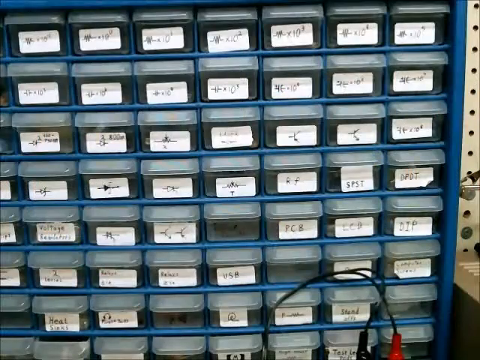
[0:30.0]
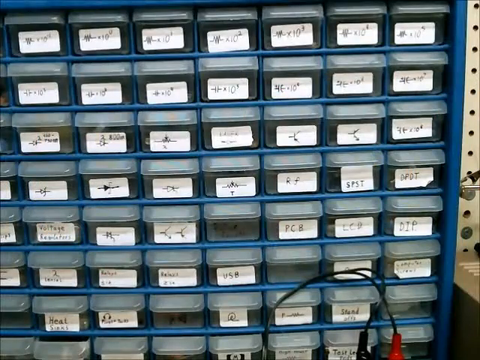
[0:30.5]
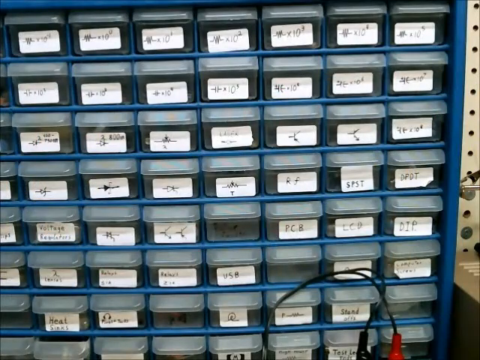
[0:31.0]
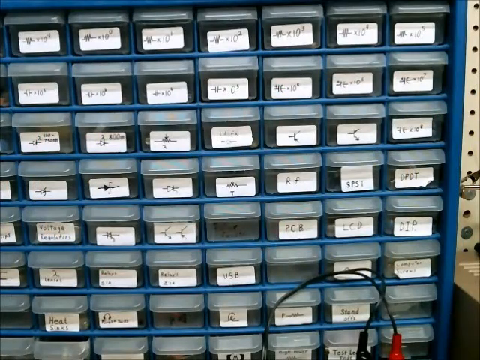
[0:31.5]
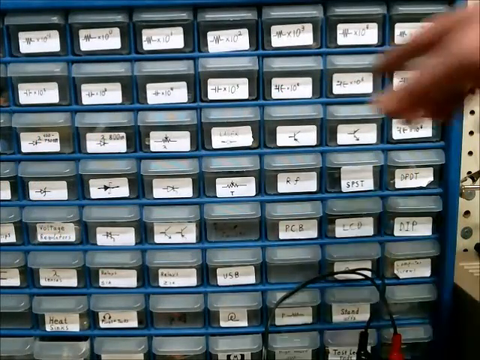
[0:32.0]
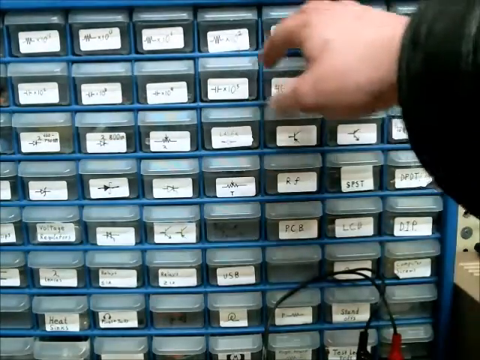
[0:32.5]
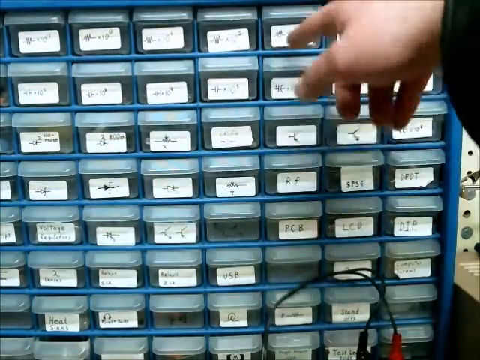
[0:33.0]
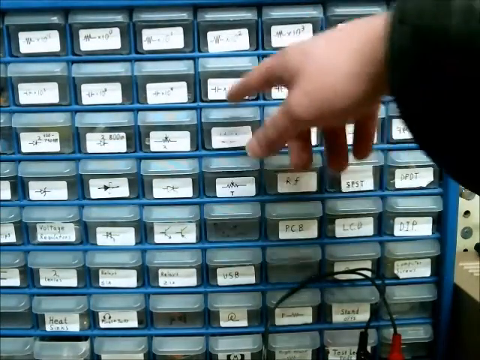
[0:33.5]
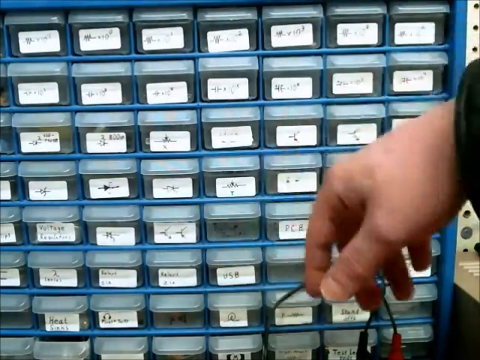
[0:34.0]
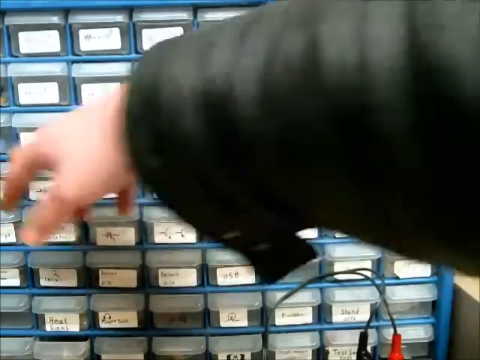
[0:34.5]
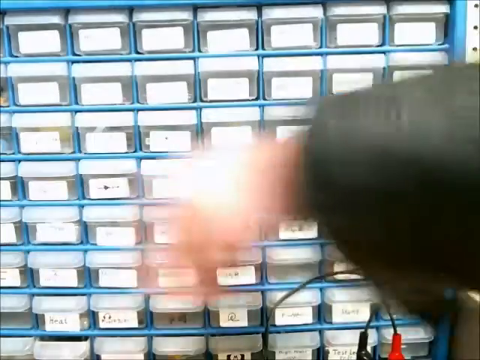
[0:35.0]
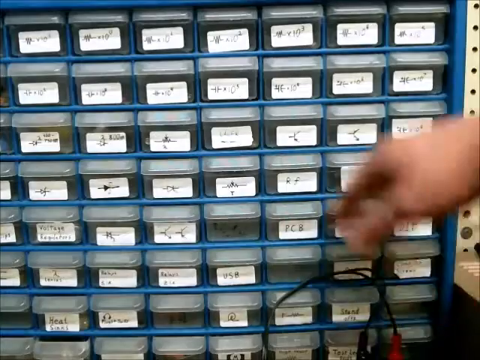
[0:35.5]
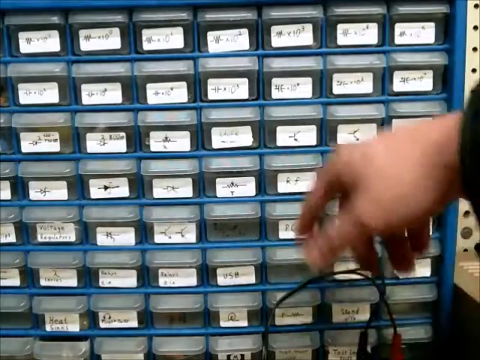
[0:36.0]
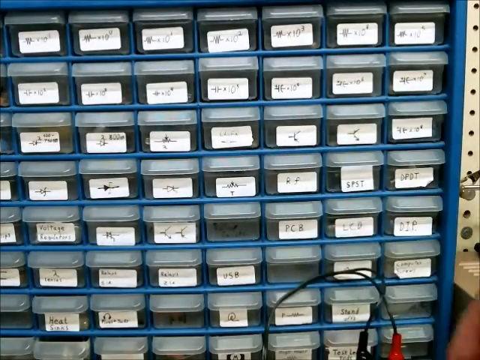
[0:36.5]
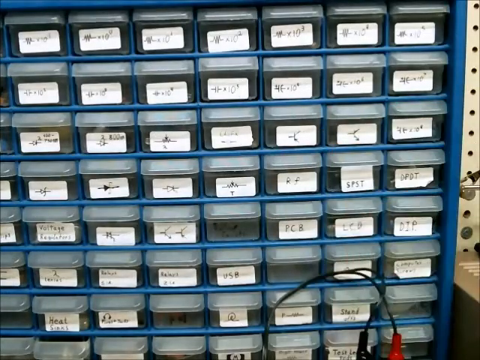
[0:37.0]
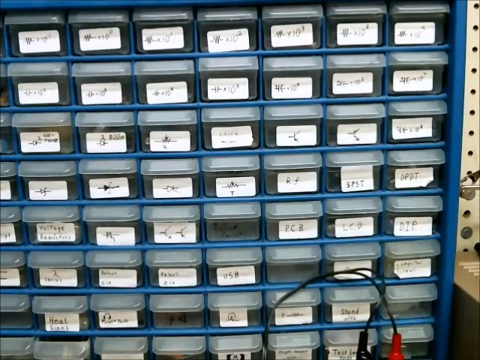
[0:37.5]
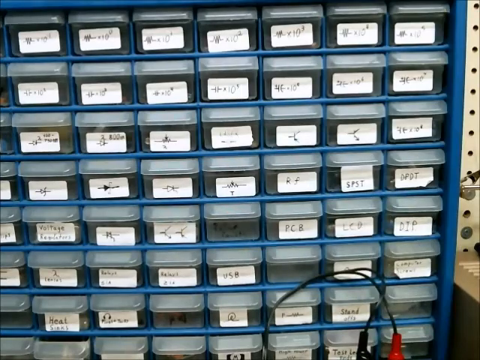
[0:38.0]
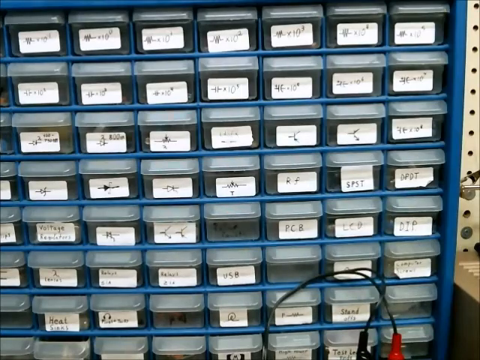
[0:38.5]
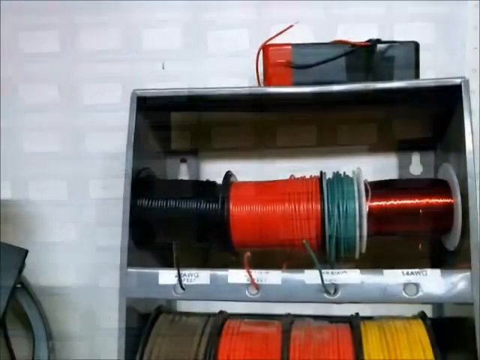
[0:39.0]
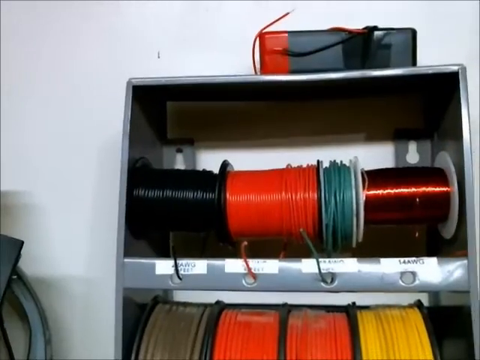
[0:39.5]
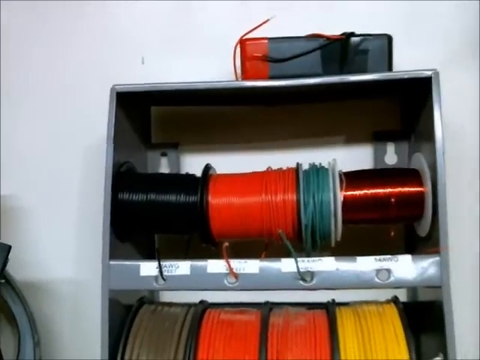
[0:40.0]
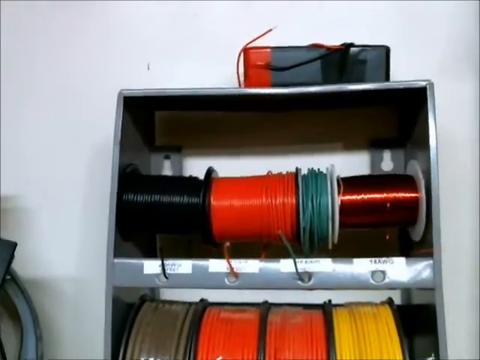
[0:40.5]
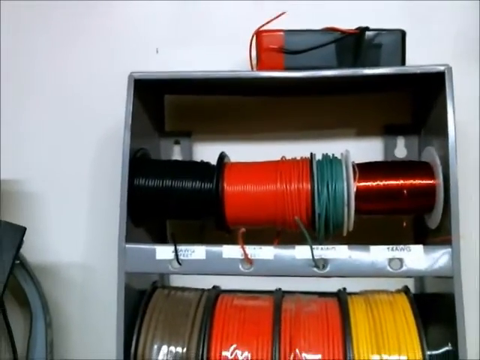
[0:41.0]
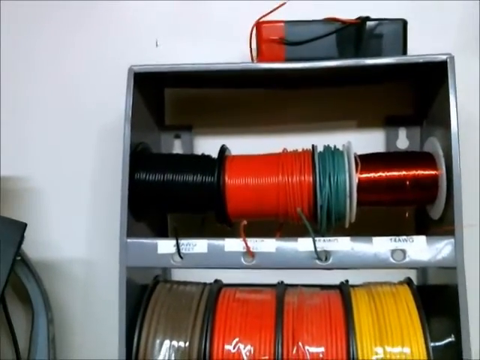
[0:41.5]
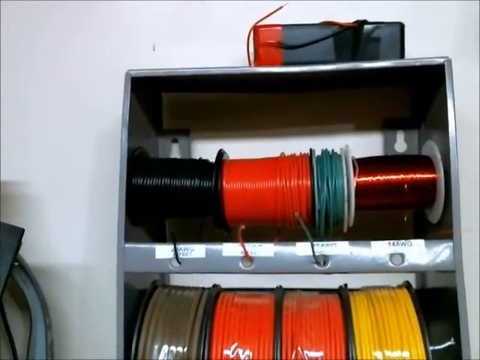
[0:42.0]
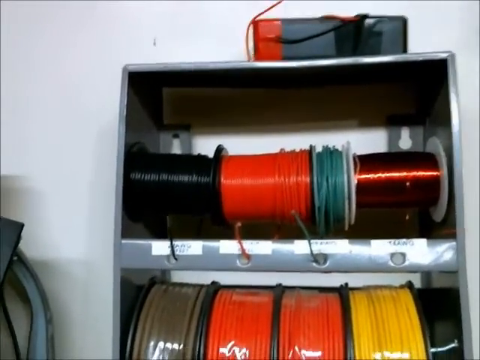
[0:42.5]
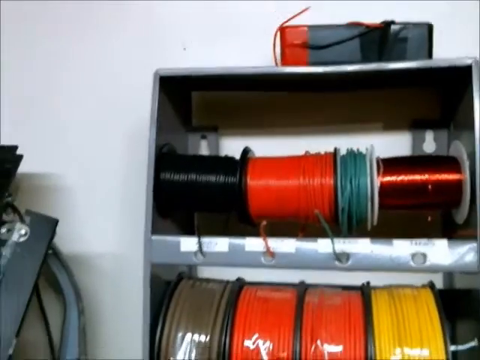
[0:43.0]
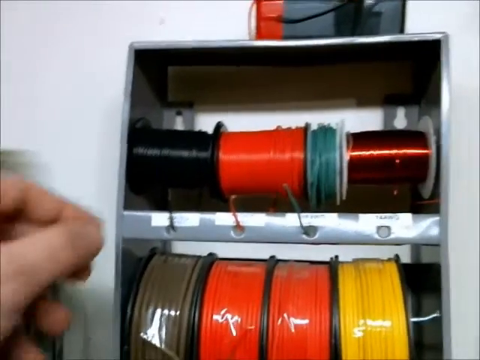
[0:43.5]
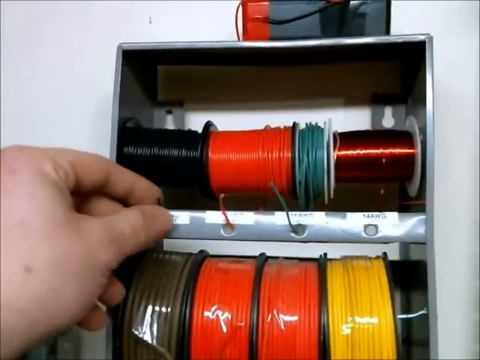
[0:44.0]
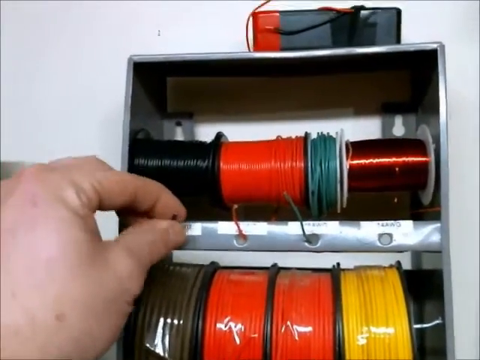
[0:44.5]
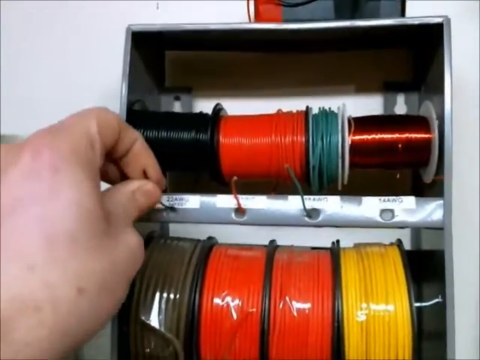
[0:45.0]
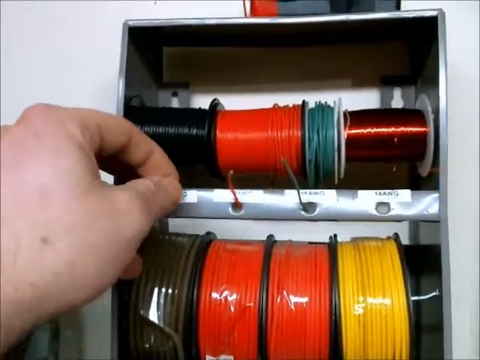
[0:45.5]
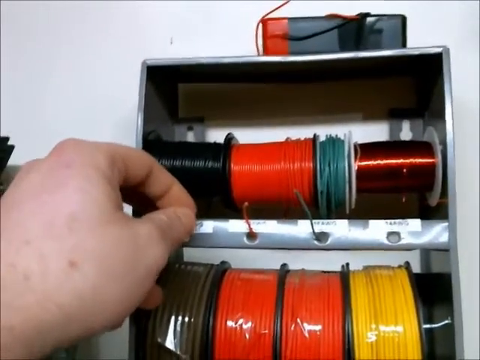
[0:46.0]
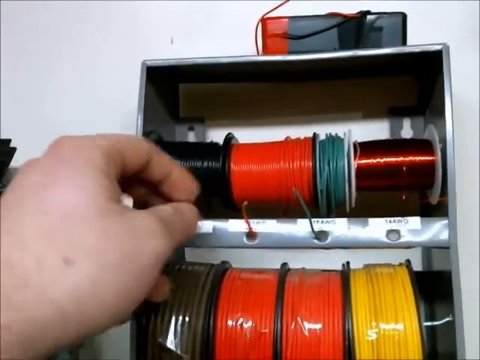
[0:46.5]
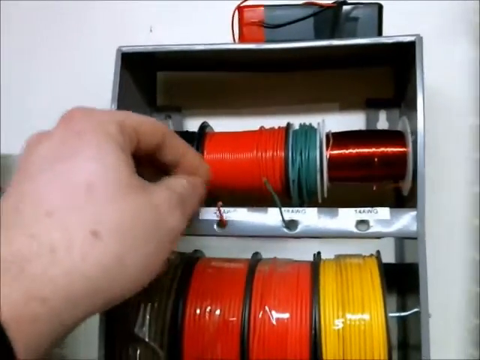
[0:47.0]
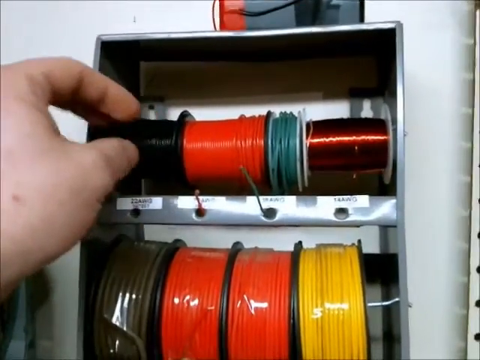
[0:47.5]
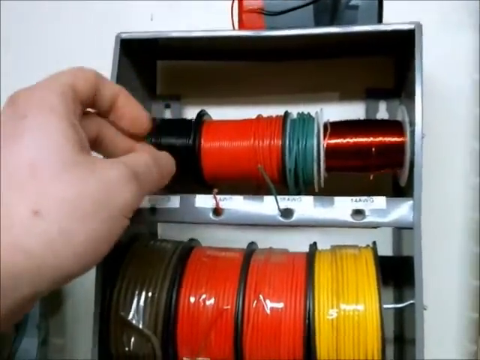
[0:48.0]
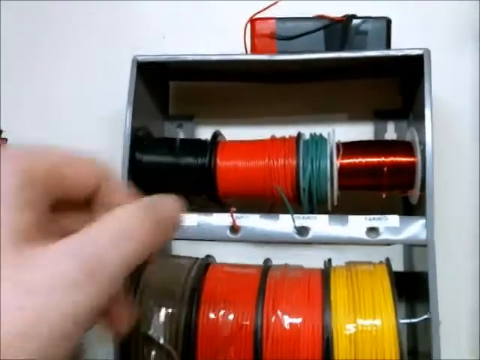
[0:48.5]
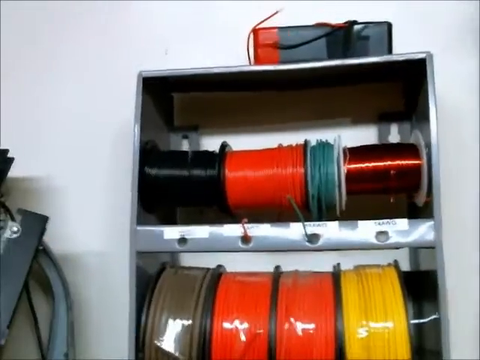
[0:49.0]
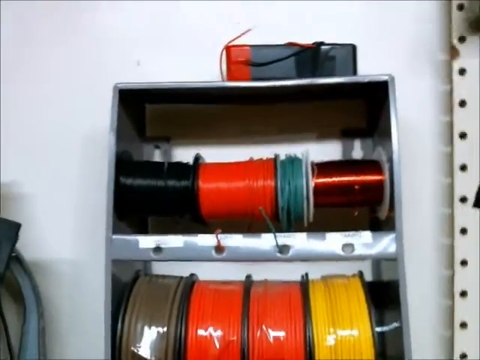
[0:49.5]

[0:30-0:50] The scene shows many cubbyholes, which may be different sizes. A right hand comes in pointing at different spots. The view then changes to something containing a bunch of wire, and a left hand comes in and touches the black wire. The shot returns to the cubbyholes, which have different numbers on them; the unit is blue with little clear cubbyholes. Seven rows of seven, 49 cubbyholes, are visible, and there are clearly more to the left side.